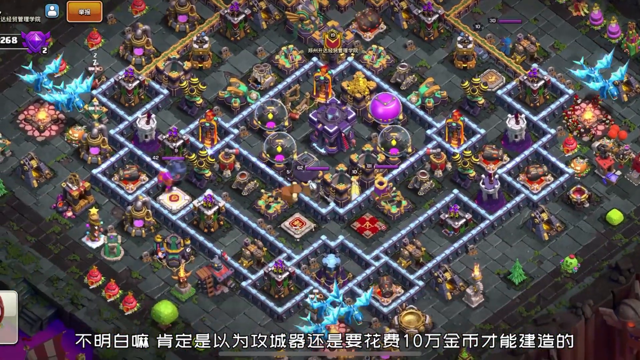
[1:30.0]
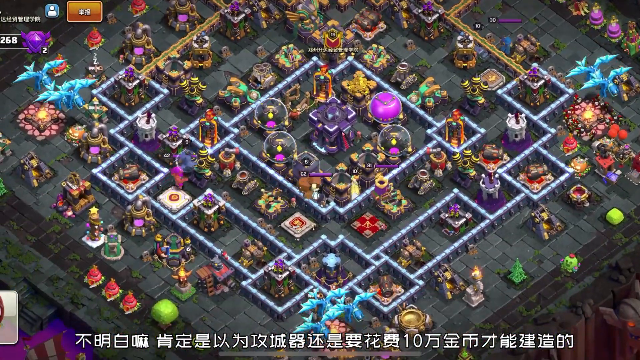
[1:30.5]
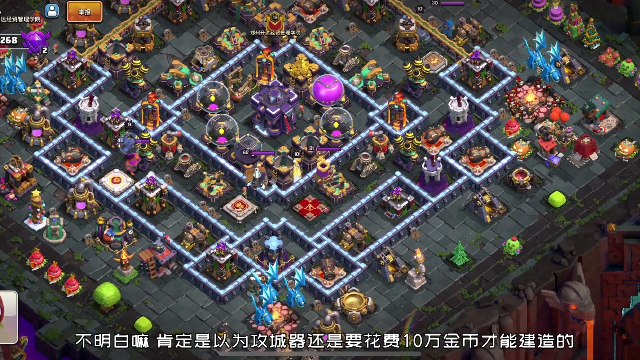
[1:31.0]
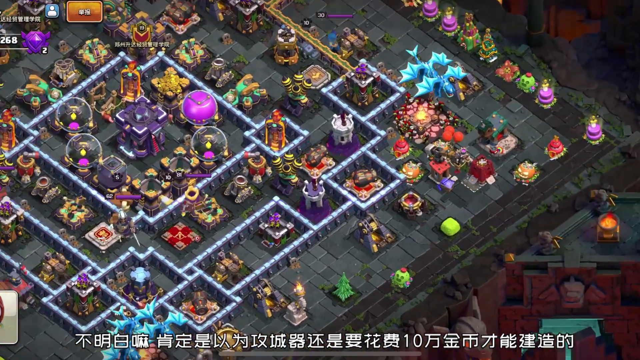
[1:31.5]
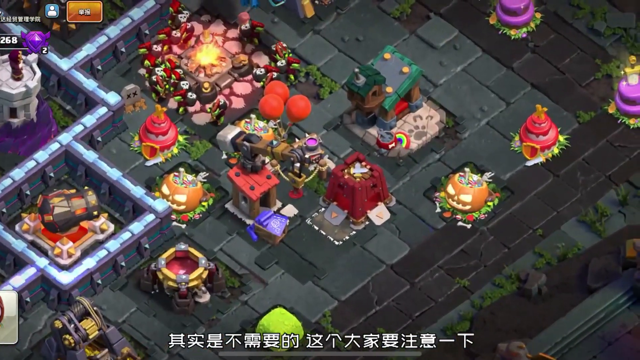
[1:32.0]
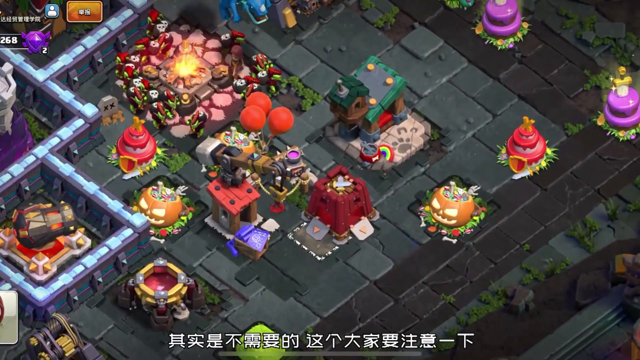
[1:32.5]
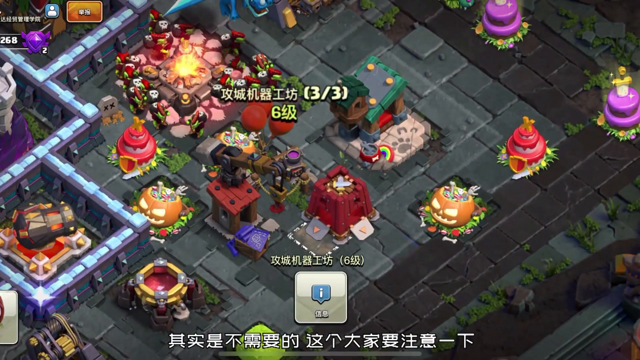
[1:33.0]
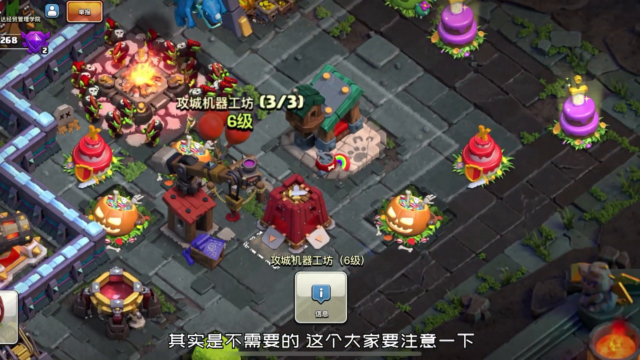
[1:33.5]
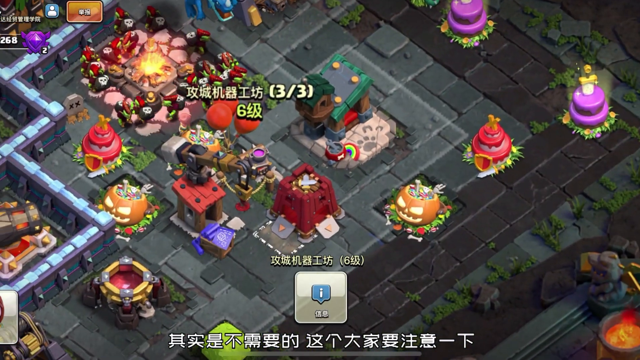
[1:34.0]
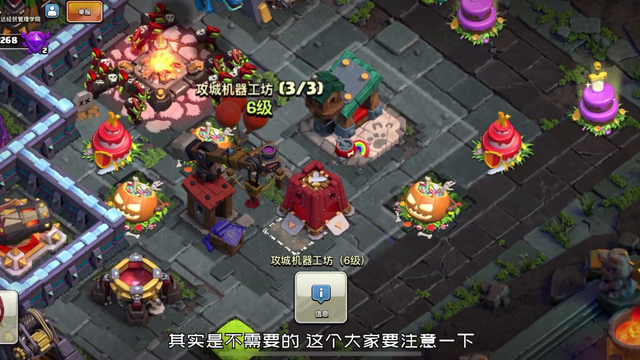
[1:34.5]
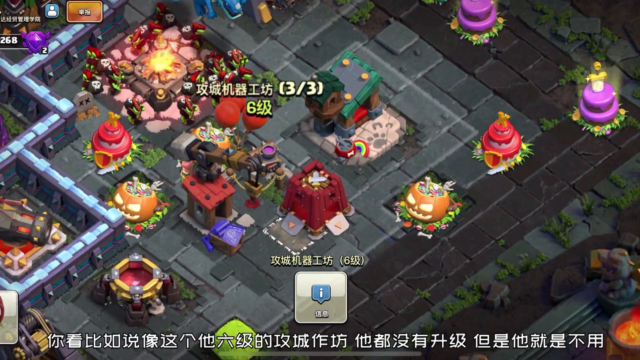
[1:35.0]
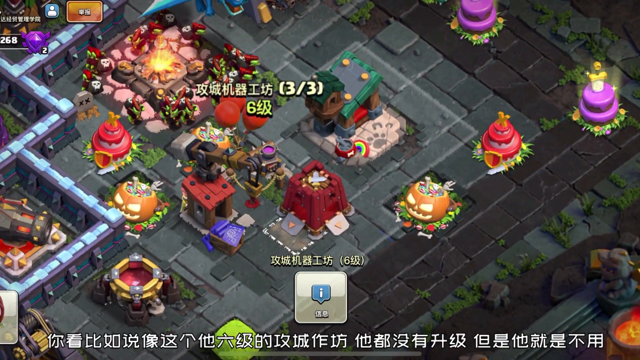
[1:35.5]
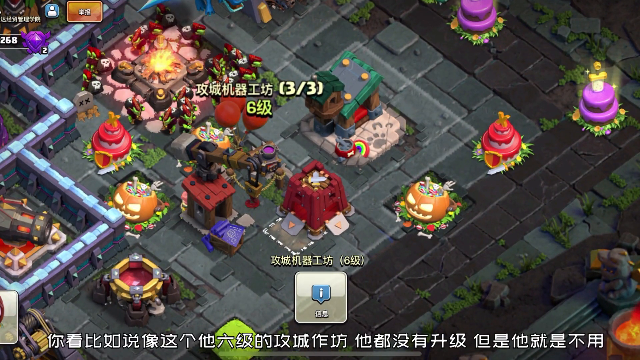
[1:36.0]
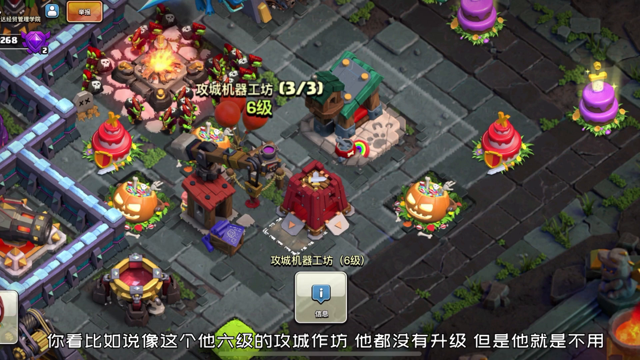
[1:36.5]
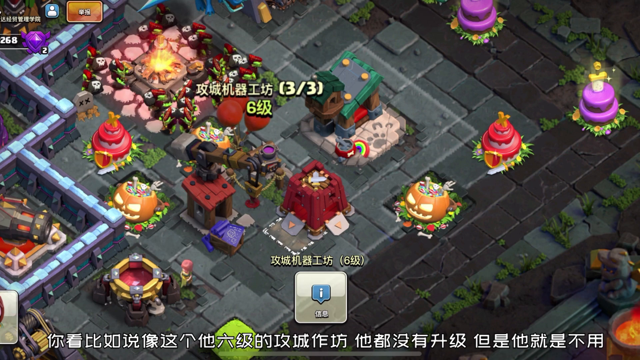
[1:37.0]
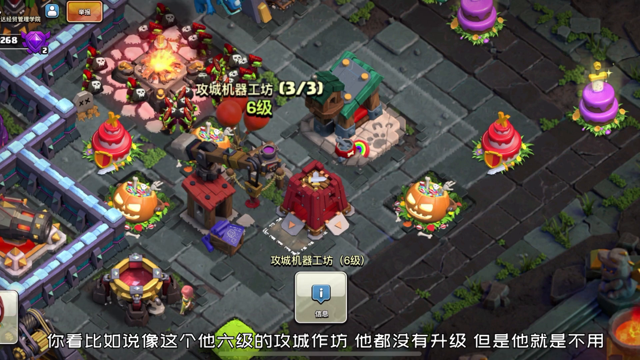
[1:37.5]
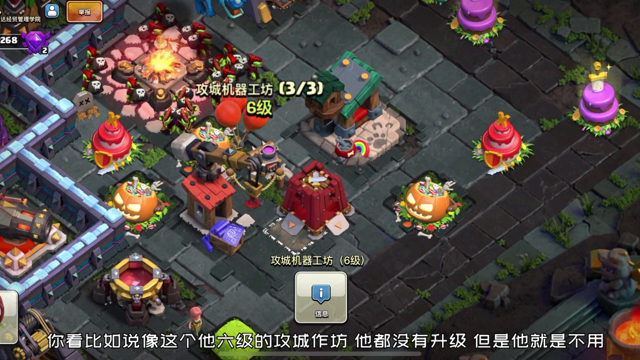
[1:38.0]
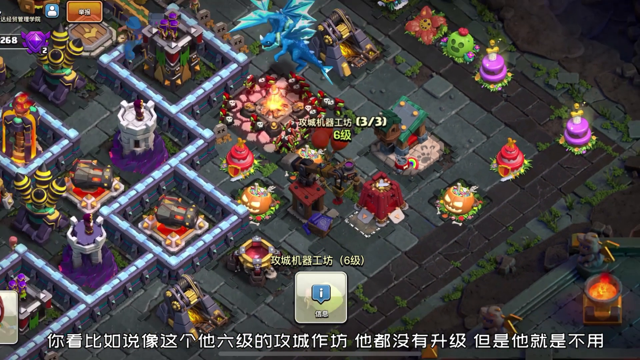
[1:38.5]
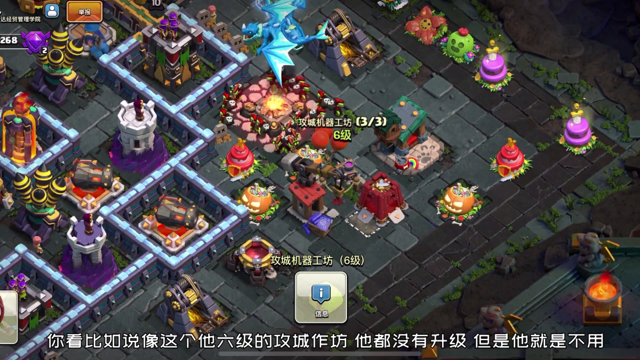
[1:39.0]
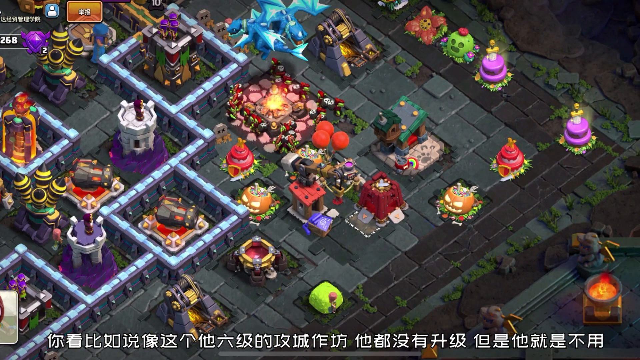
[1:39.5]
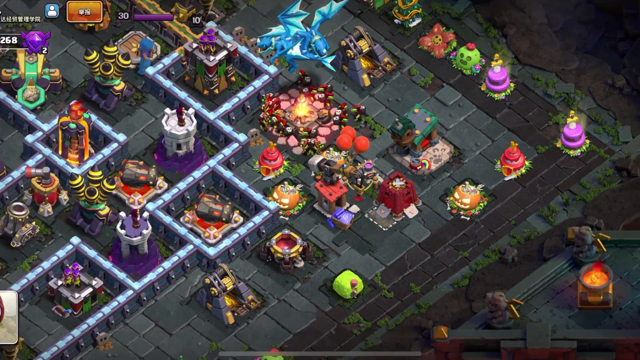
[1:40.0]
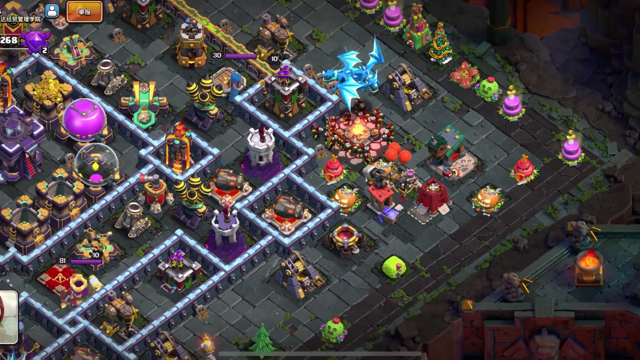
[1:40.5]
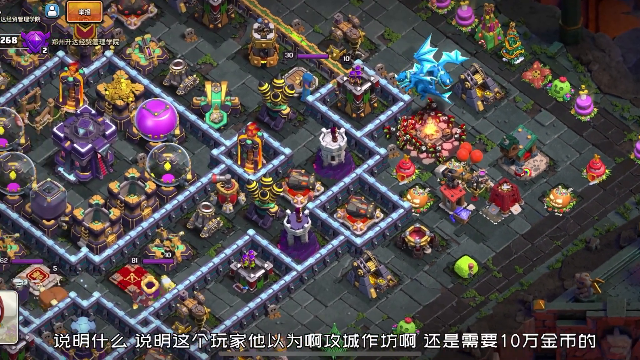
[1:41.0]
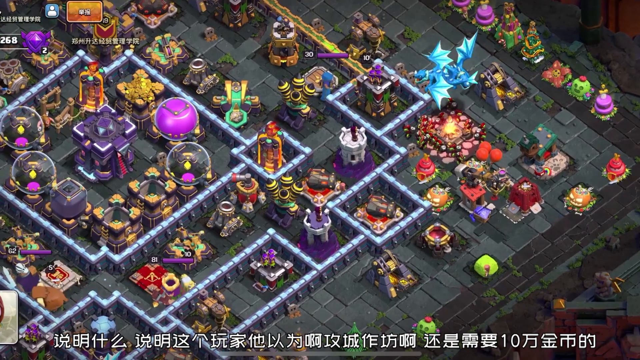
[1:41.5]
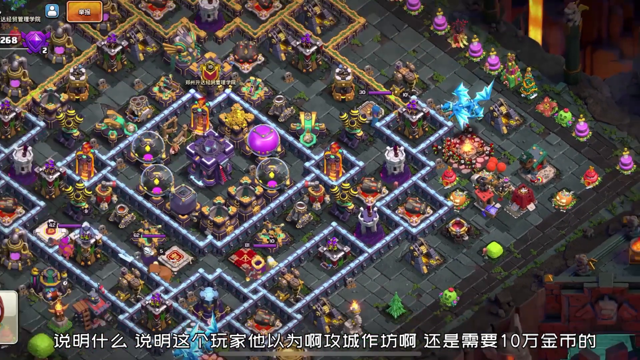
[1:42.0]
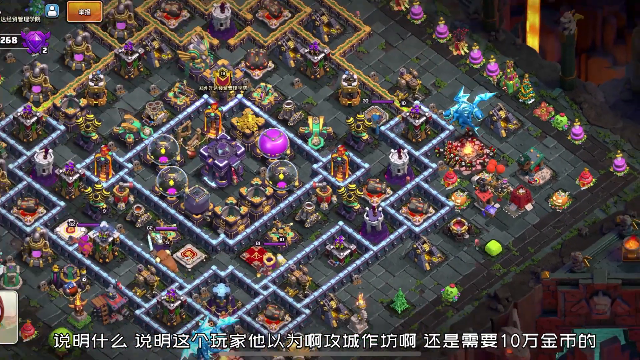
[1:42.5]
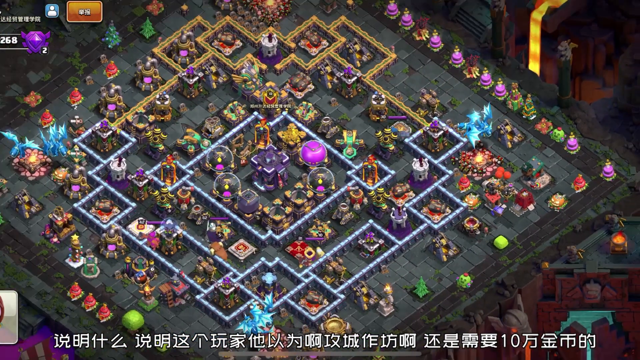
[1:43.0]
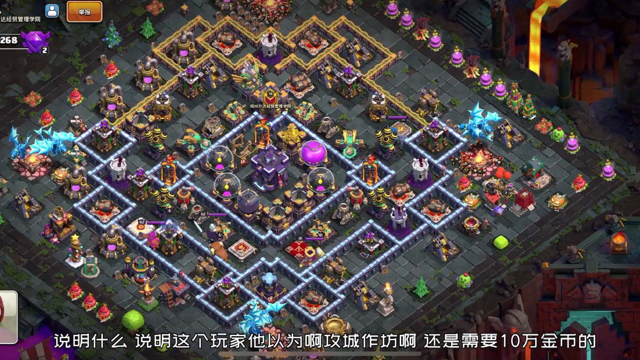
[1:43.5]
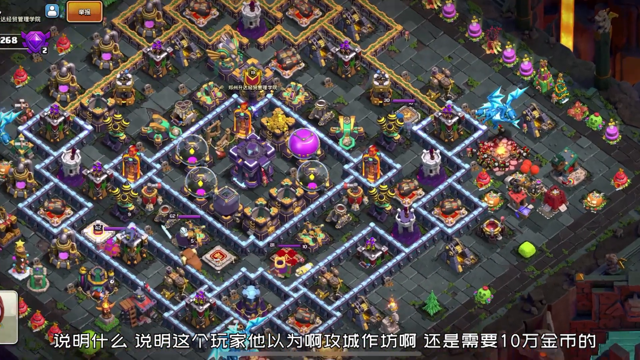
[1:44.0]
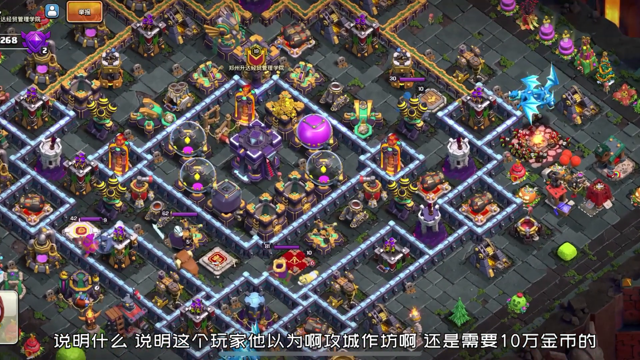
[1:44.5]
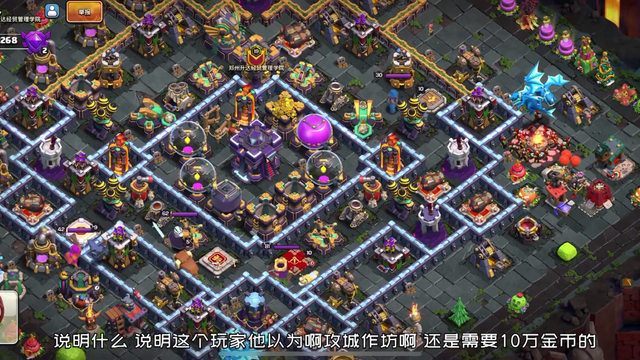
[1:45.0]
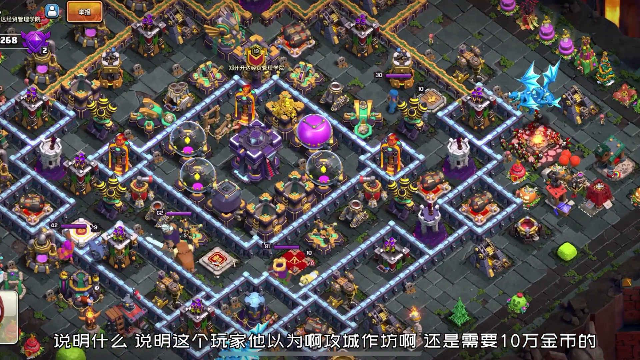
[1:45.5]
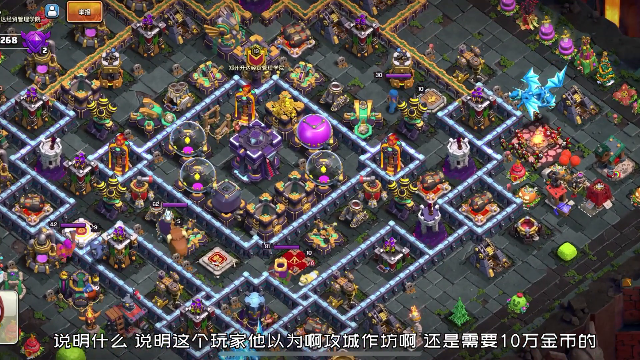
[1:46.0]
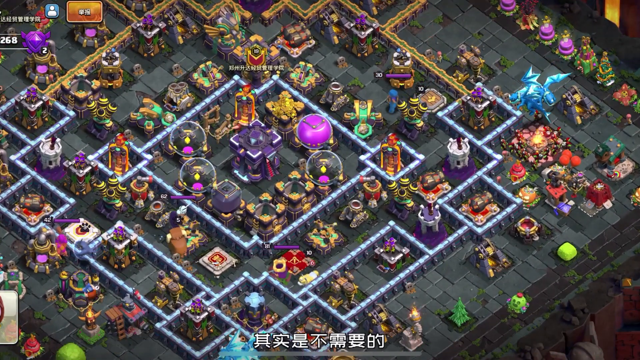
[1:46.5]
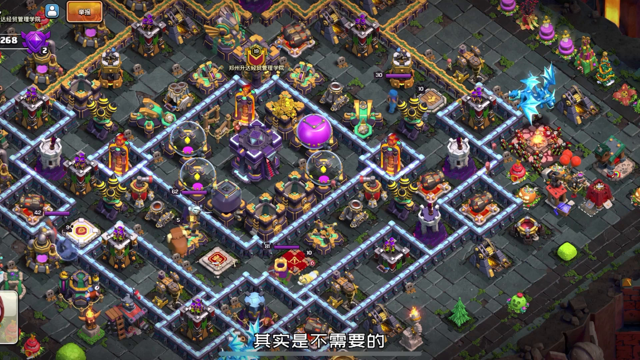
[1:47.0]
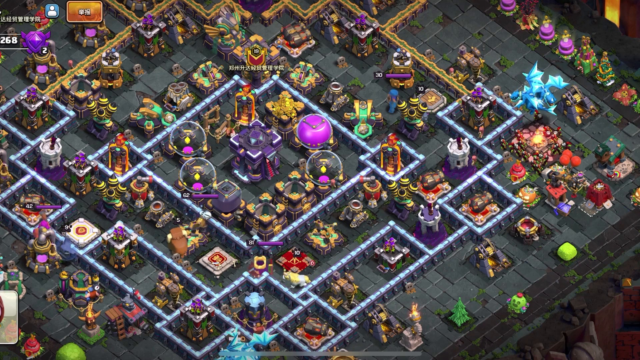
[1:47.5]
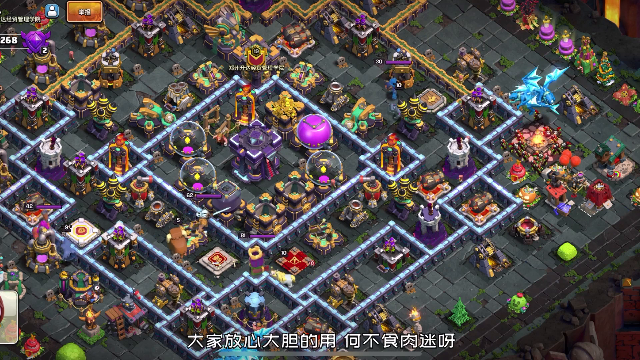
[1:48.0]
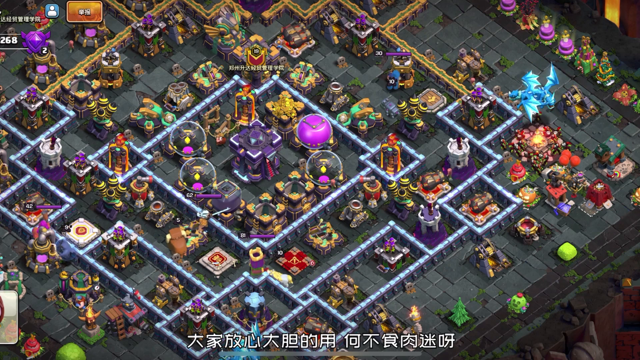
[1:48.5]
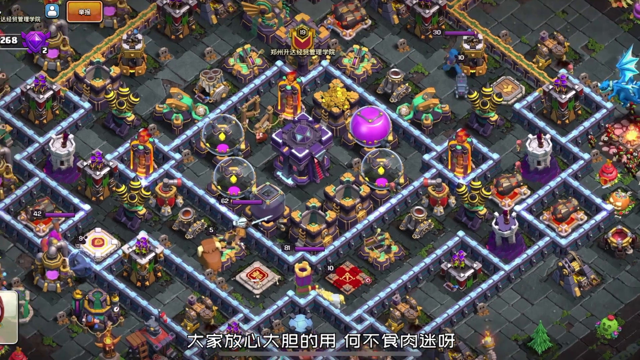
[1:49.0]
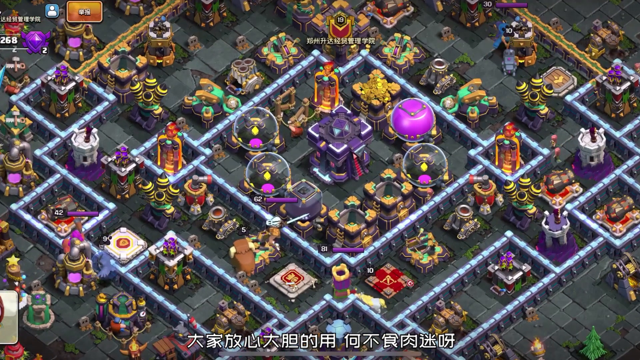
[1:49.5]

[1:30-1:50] The video focuses on a zoomed-in section to the right. A vehicle or object is clicked, and symbols, numbers and text pop up. It is the same brown and red object with a lever and red balloons. Near this object are about two light gray jack-o'-lantern pumpkins on top of a kind of green floral base, and what look like tiered cakes: two red cakes and two purple cakes. A small green, gray and red hut is right in the middle, and all of this is on gray block cement. Very tiny figures can be seen walking around. There is also a bonfire with a rectangular or square base, with blue winged dragons flying above the fire. The view then zooms out a little and zooms toward the middle, showing a kind of purple square hut or box and four clear globes with purple hues inside, all encased within a square box. Square boxes of all different shapes and sizes appear across the image, along with lots of color such as green and purple, trees, blue winged dragons, orbs, bonfires and walking figures.